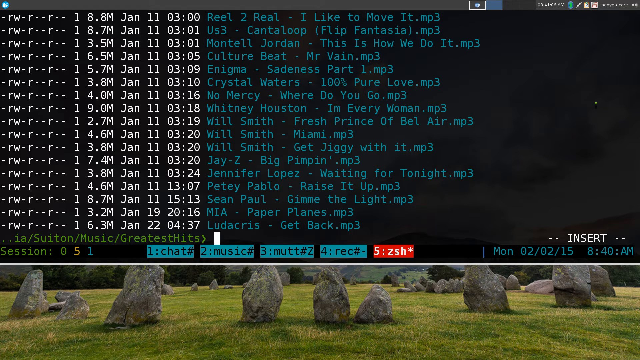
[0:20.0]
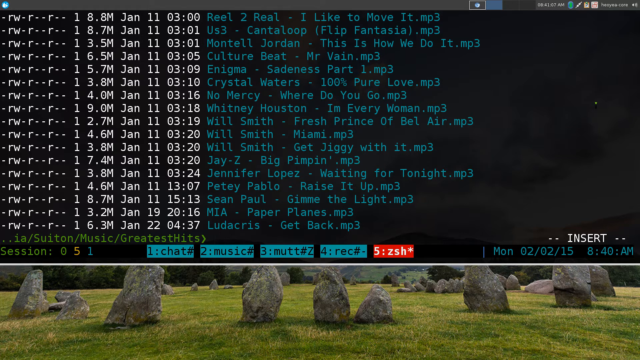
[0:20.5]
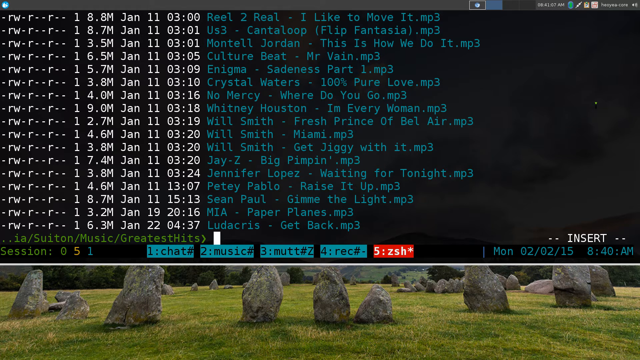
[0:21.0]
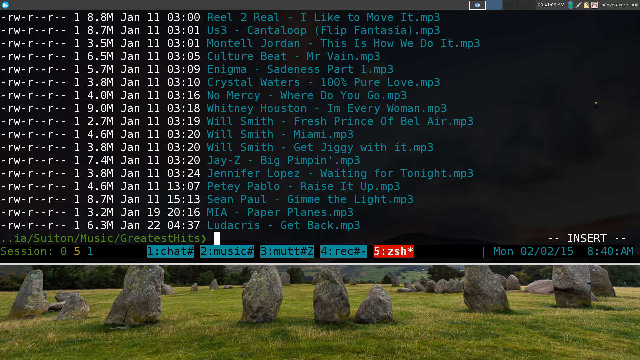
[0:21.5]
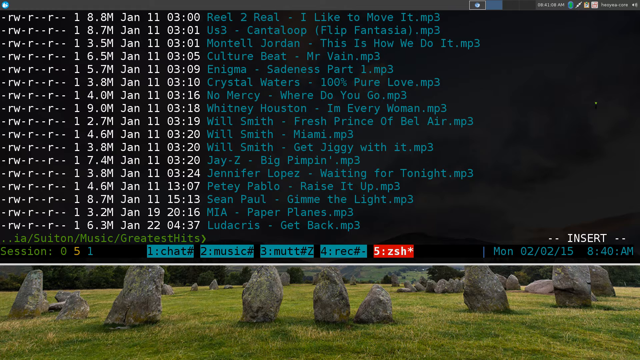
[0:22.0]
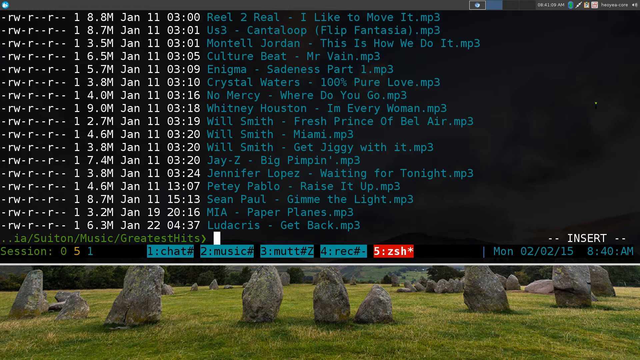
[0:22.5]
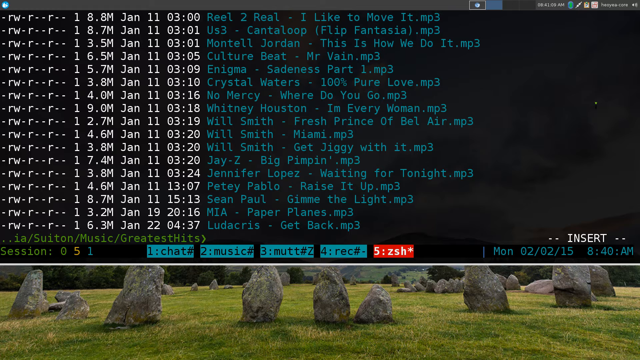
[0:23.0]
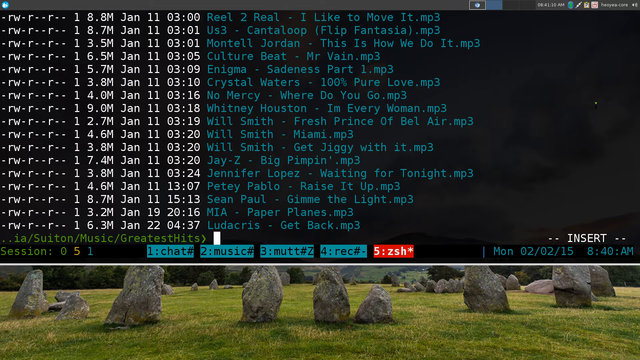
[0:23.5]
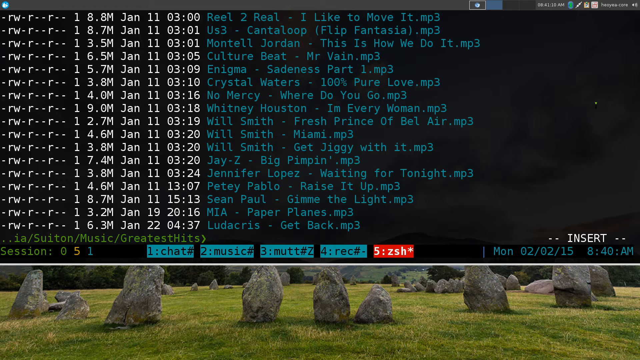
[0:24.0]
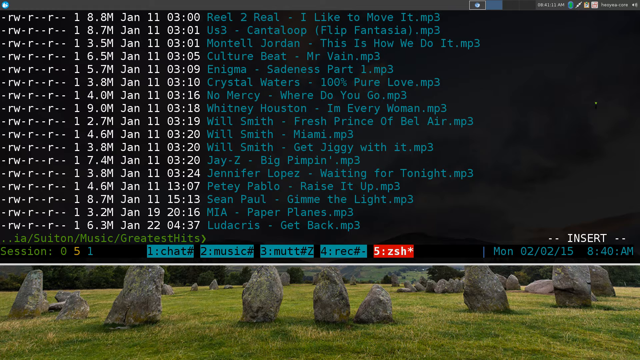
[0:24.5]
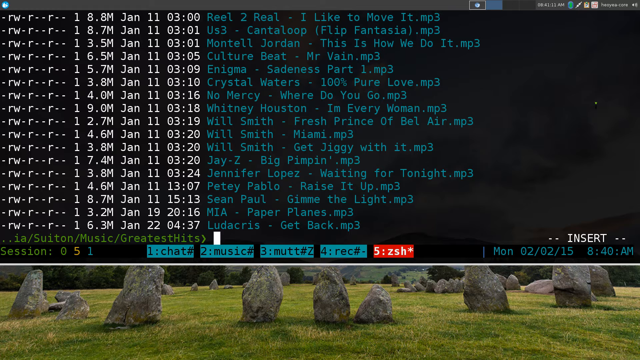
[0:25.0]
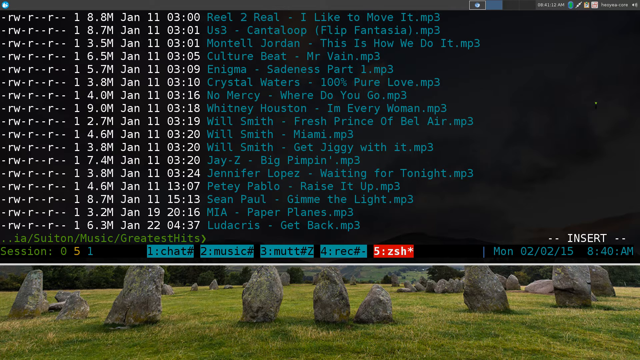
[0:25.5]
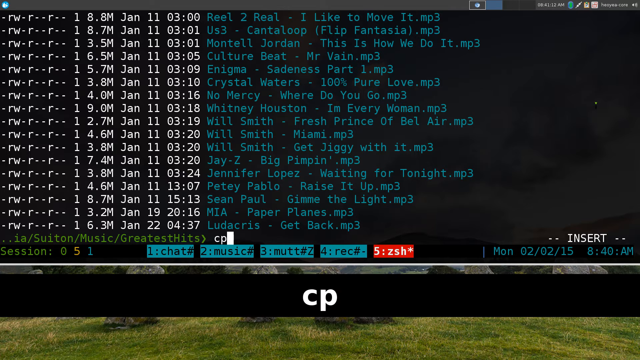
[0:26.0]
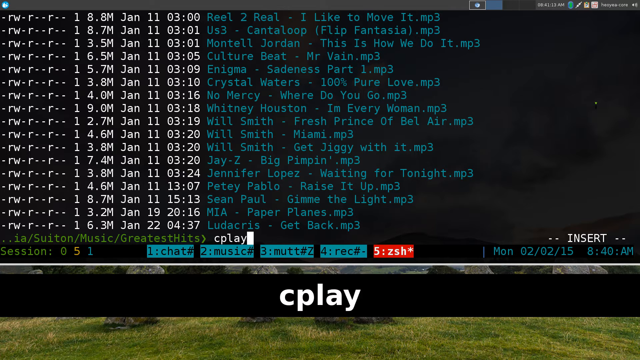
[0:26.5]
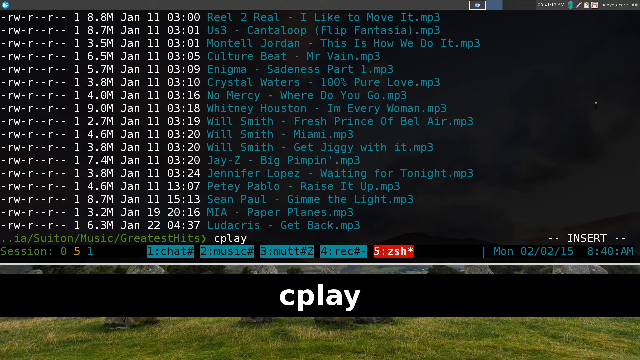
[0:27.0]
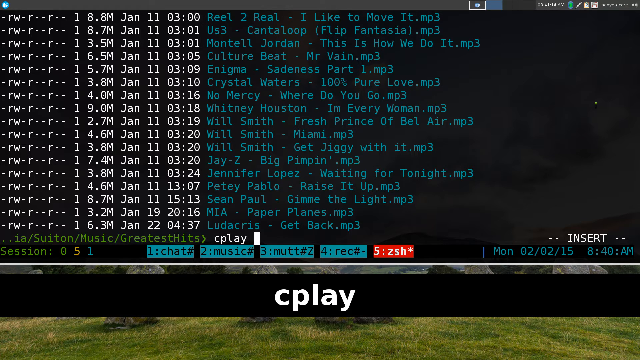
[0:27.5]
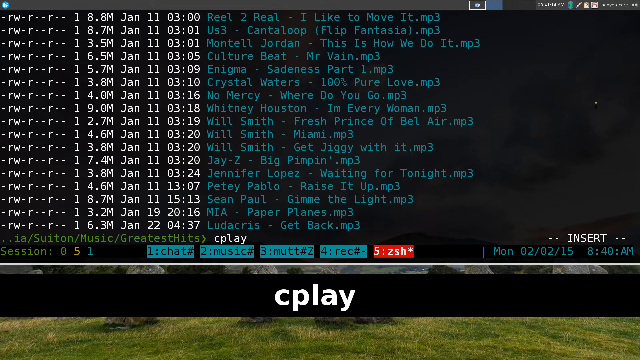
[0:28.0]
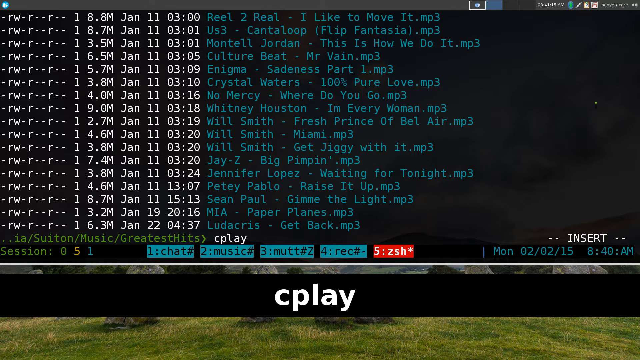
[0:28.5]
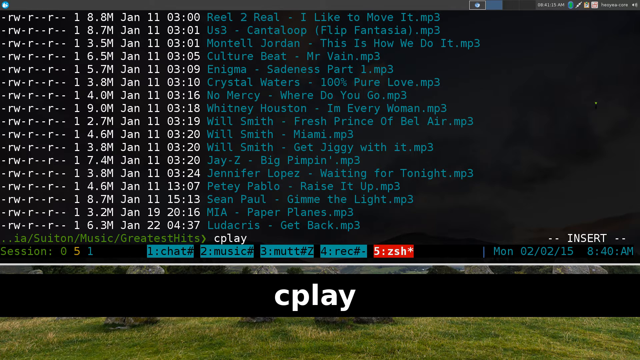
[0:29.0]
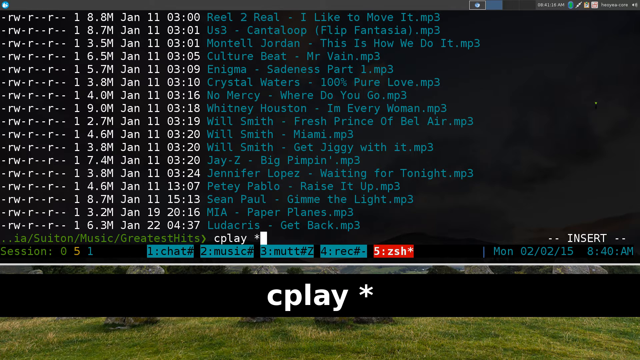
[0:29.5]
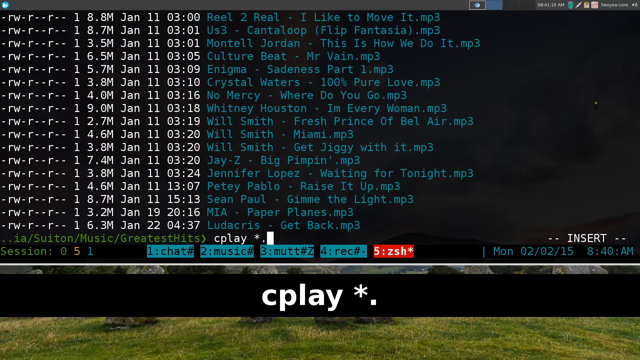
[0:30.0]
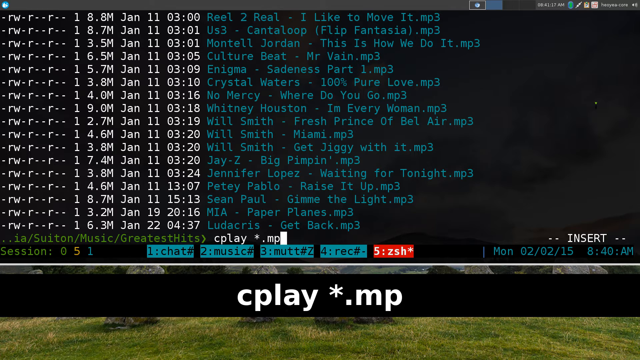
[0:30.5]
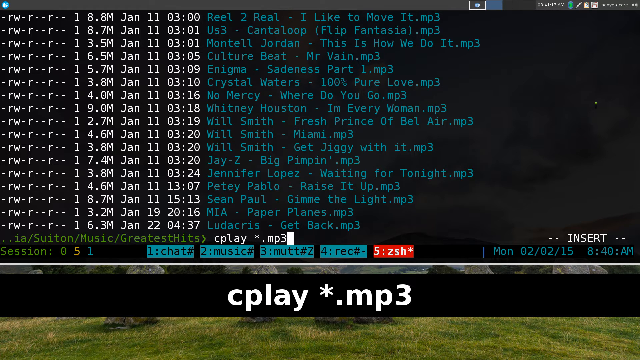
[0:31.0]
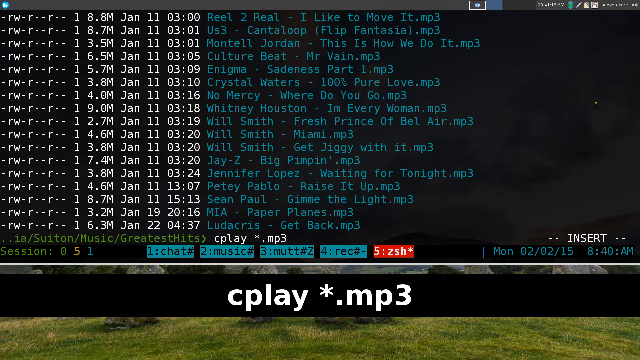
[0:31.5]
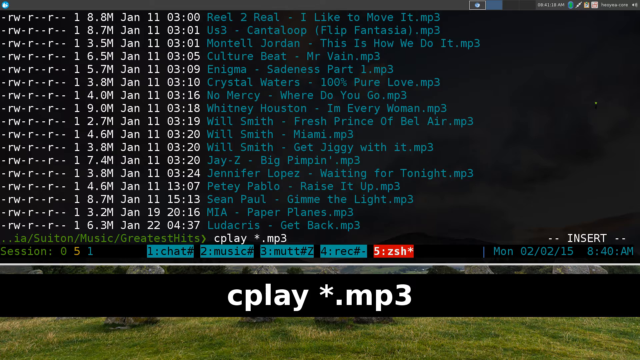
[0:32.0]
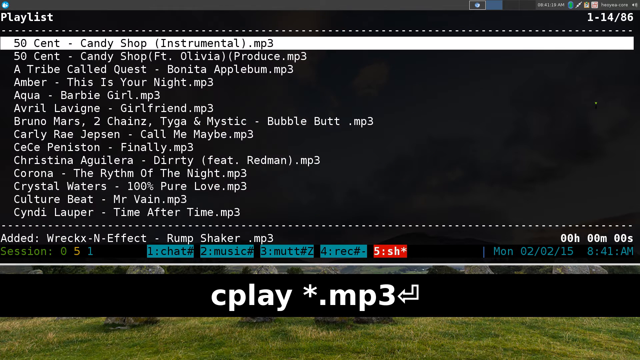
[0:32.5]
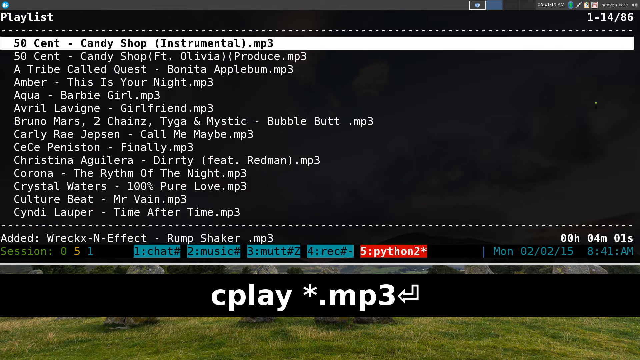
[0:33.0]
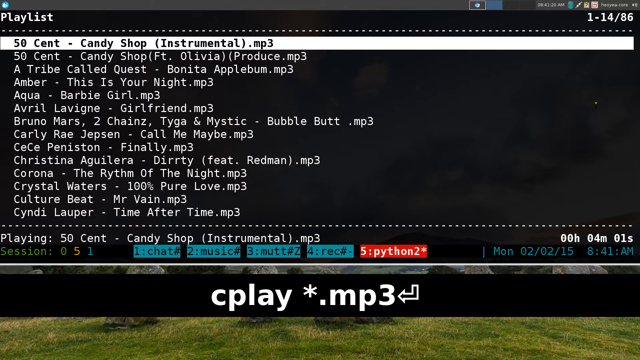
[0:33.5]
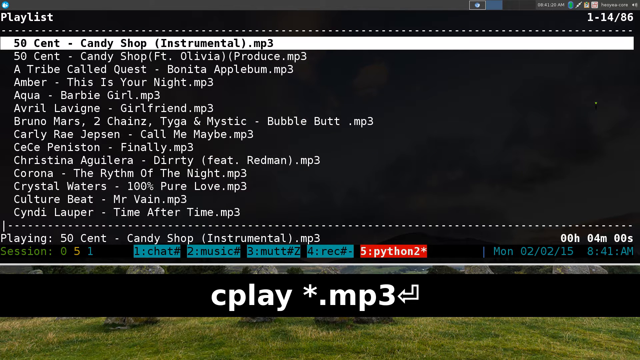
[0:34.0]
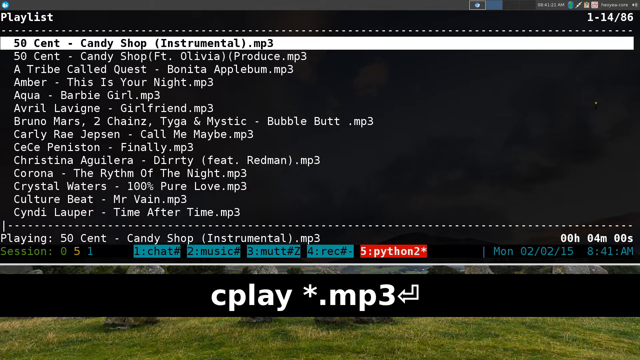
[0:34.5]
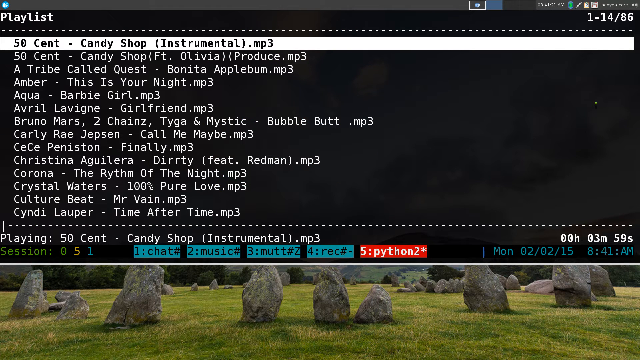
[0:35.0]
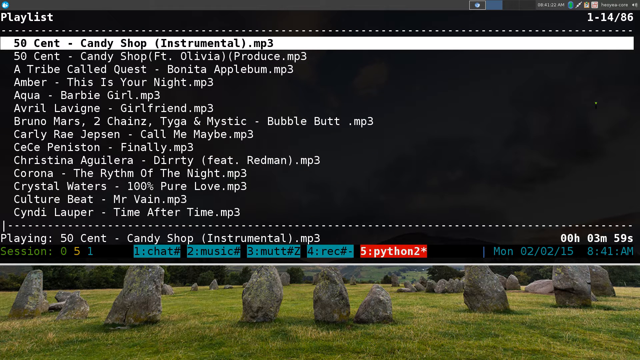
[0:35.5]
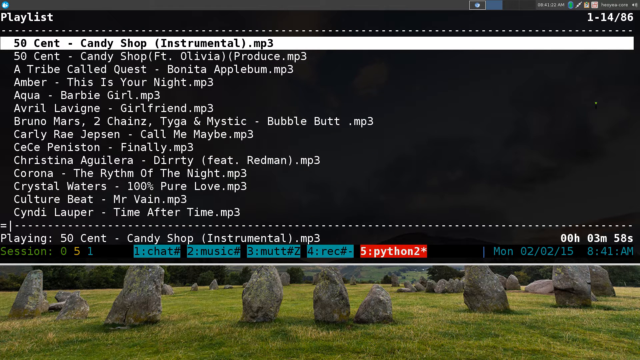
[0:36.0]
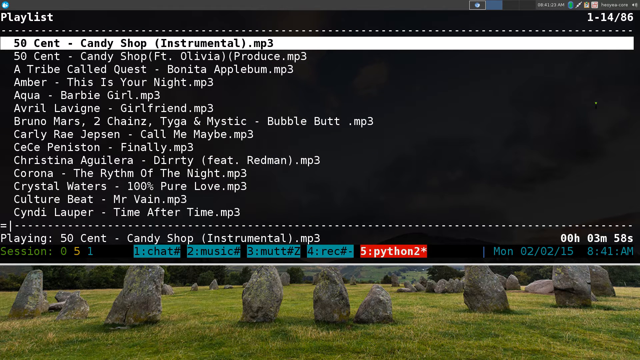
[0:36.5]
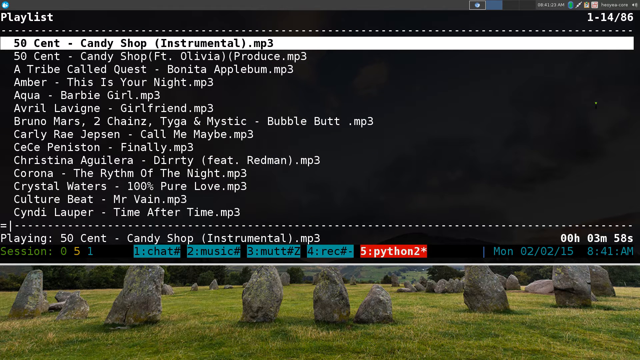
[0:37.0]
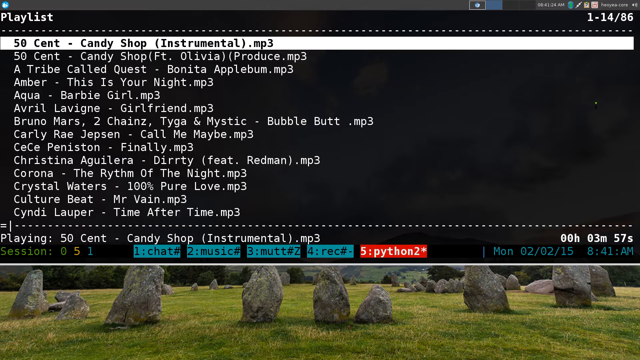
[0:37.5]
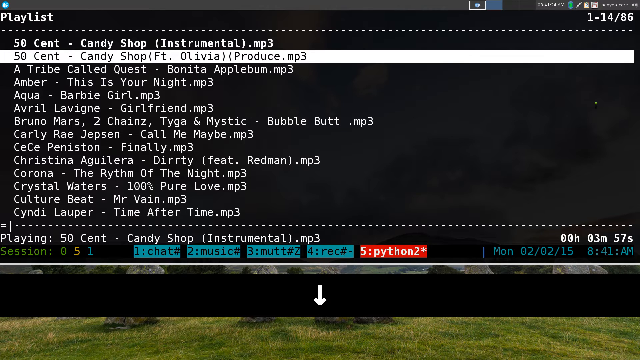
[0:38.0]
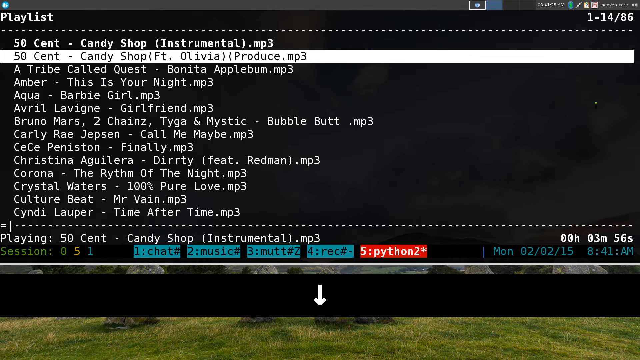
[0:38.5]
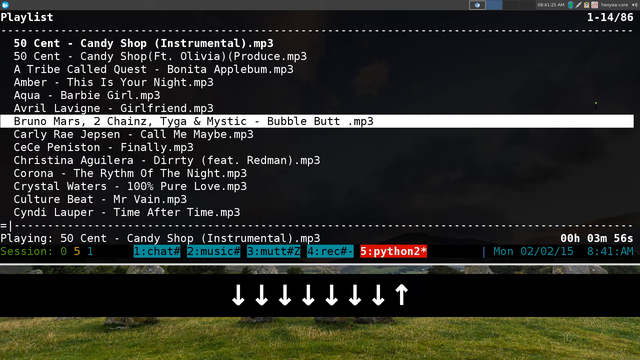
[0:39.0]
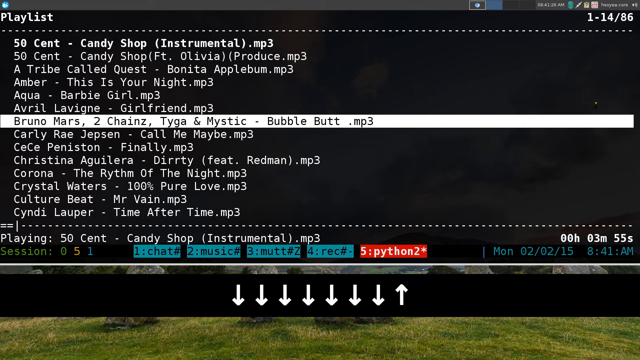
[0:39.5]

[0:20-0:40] The command screen shows the various songs with their dates and sizes. After a few moments, the user types cplay followed by a pound sign and .mp3 and presses enter. This opens a playlist area with the songs in alphabetical order; the first song is "50 cent, Candy shop, instrumental.mp3". All the songs are in mp3 format, and at the bottom the window shows it is playing the first song on the list, which is four minutes and one second long. The user moves up and down the list, showing that any particular song can be played. Below the list, where it gets cut off, there is a dotted line that fills with equal signs as the song plays, showing it to be a music player.